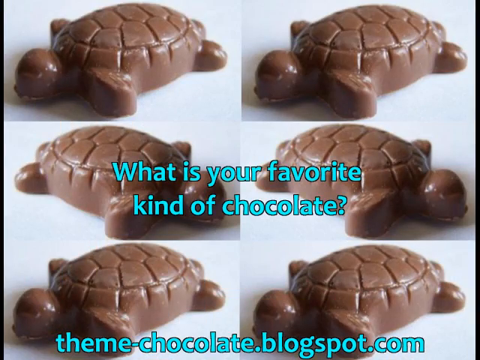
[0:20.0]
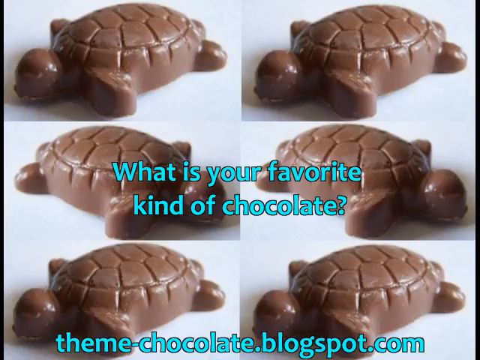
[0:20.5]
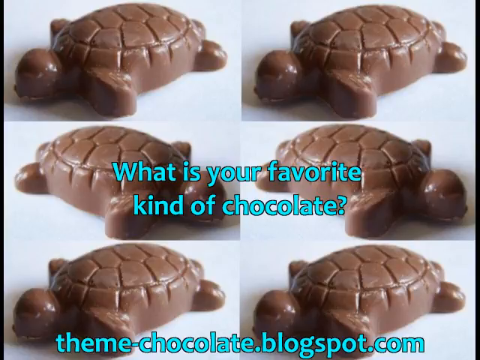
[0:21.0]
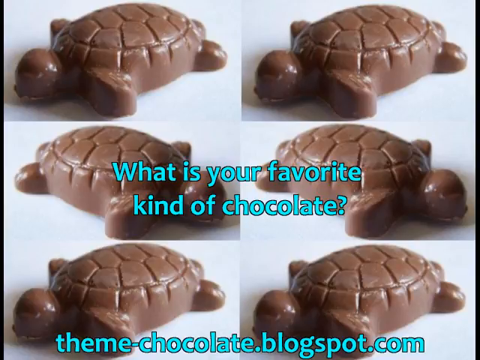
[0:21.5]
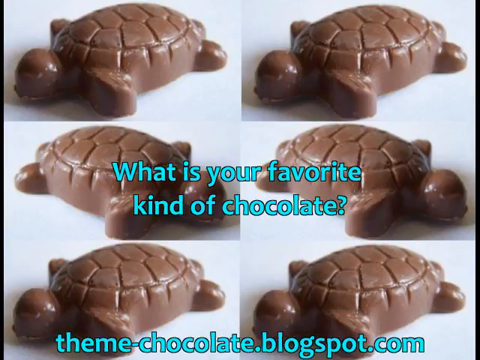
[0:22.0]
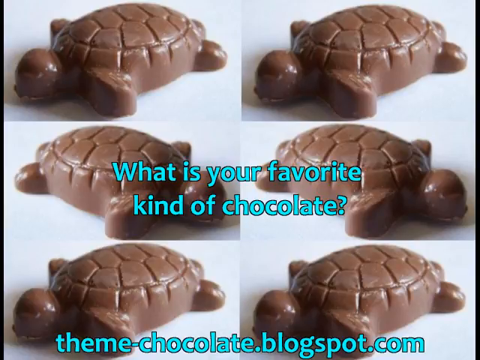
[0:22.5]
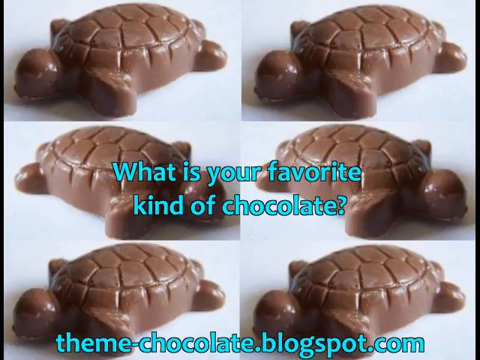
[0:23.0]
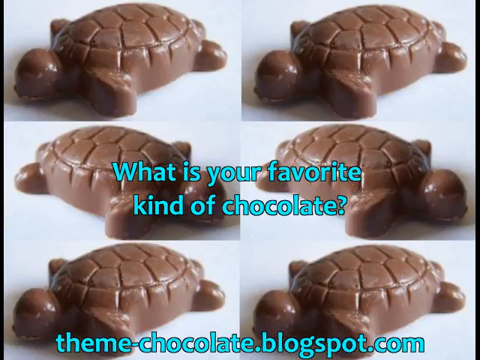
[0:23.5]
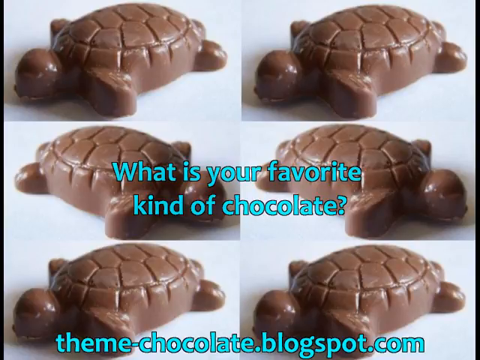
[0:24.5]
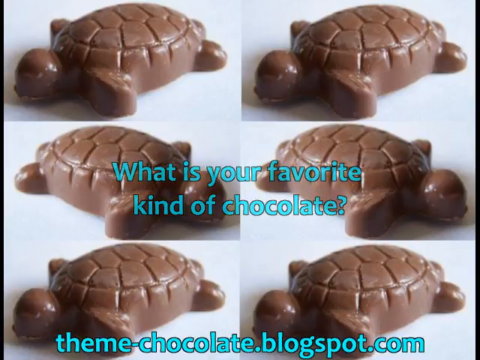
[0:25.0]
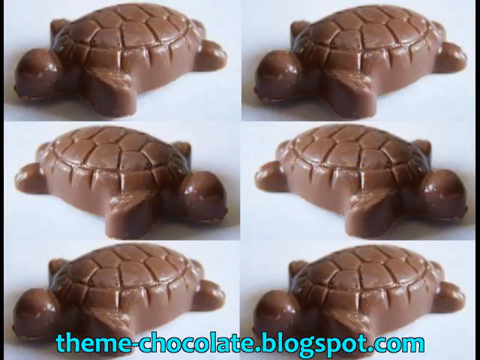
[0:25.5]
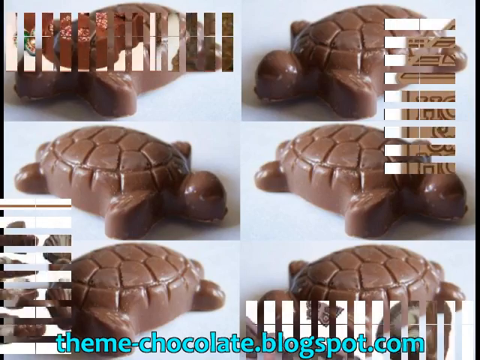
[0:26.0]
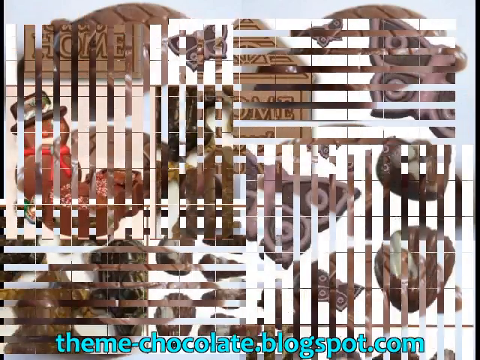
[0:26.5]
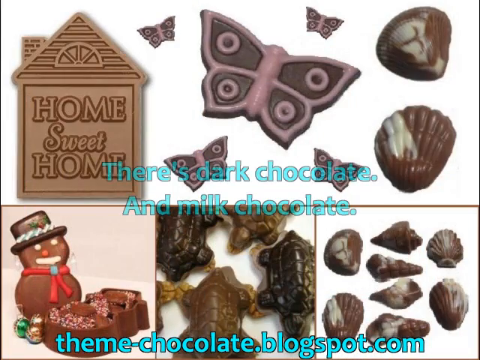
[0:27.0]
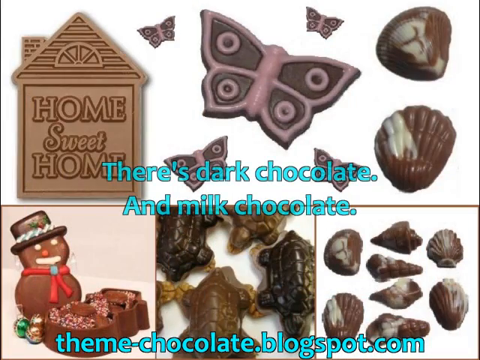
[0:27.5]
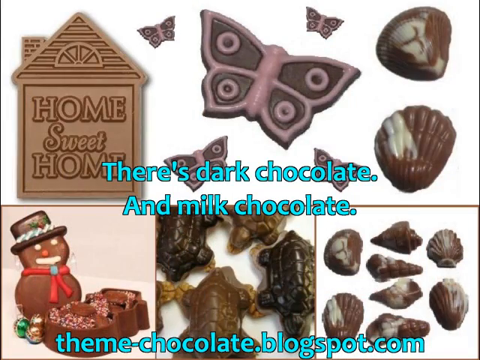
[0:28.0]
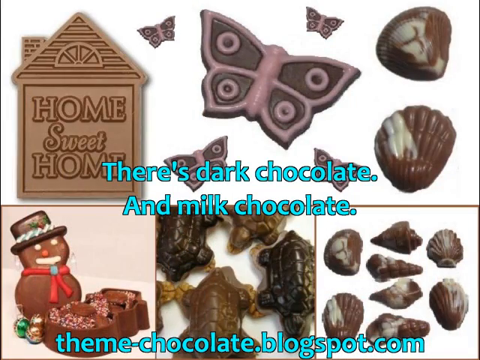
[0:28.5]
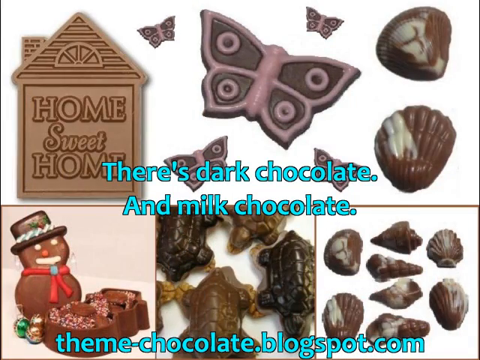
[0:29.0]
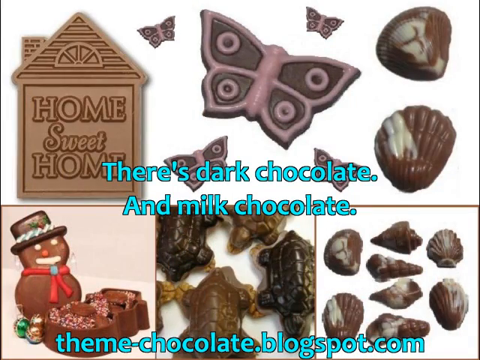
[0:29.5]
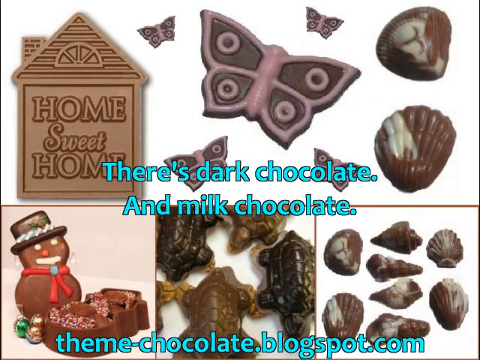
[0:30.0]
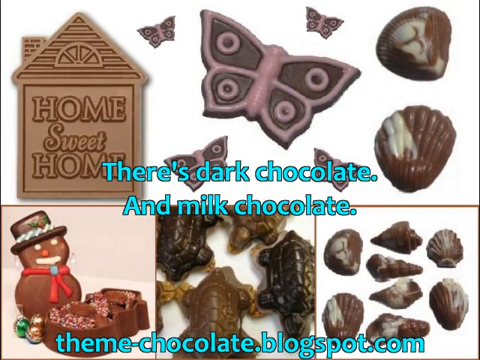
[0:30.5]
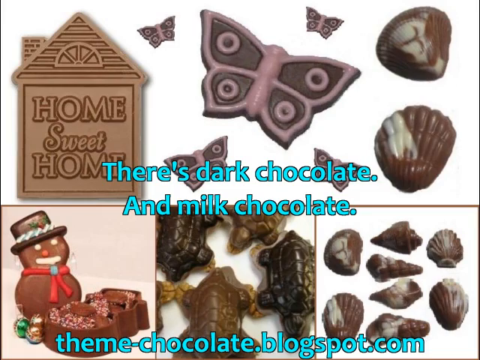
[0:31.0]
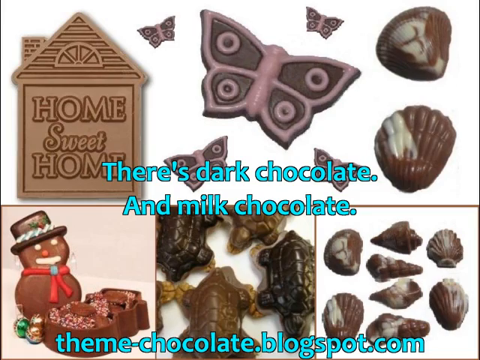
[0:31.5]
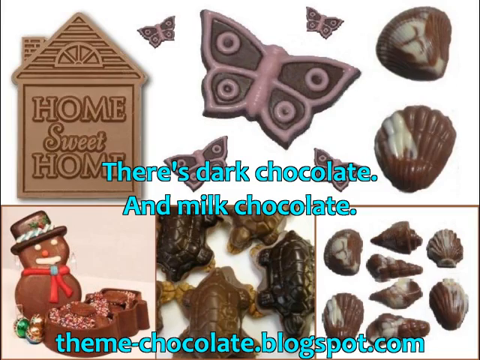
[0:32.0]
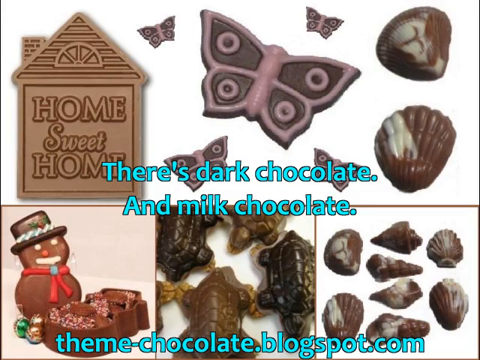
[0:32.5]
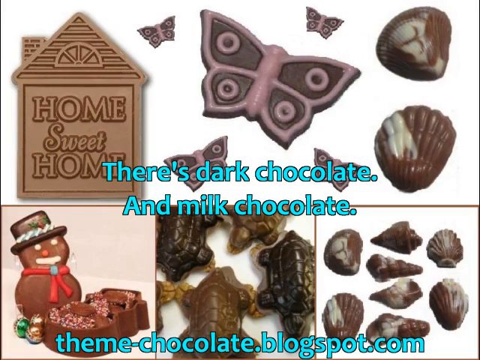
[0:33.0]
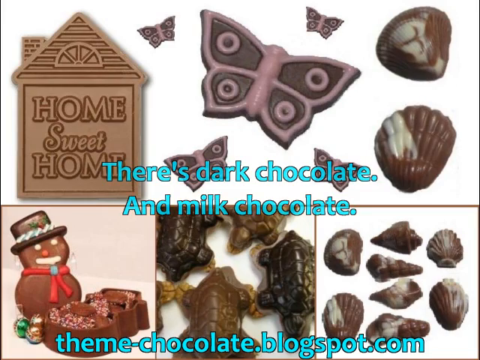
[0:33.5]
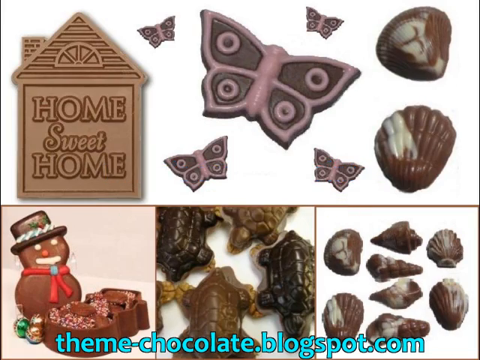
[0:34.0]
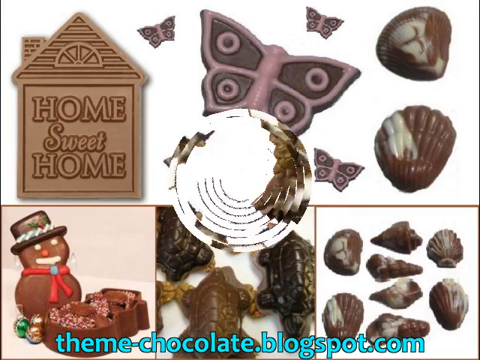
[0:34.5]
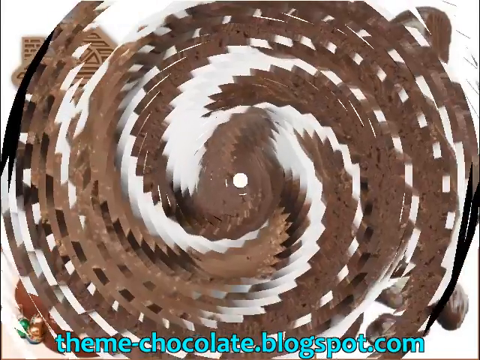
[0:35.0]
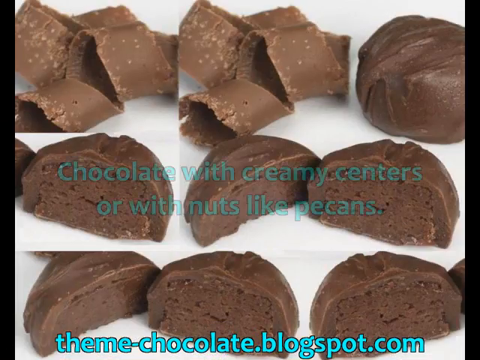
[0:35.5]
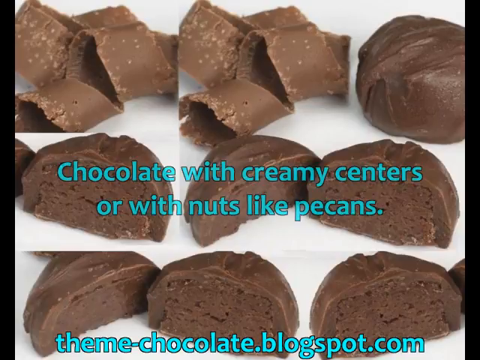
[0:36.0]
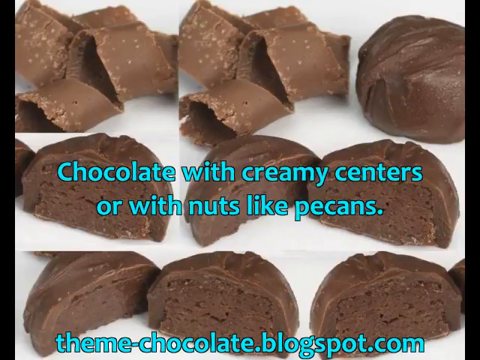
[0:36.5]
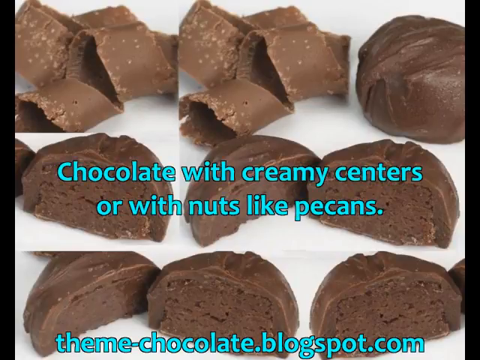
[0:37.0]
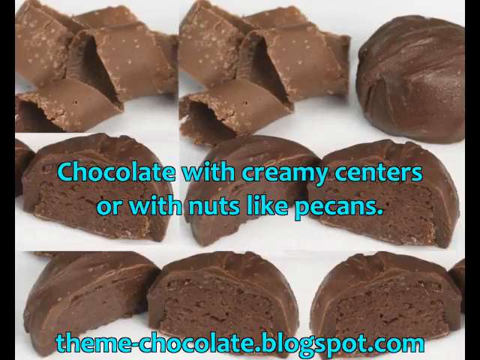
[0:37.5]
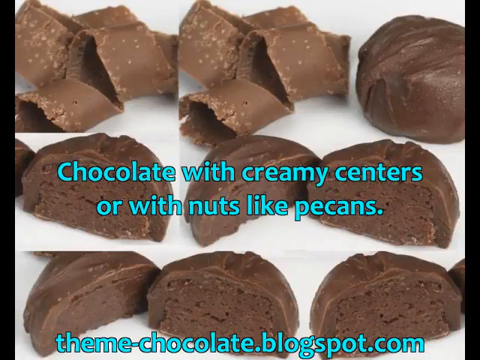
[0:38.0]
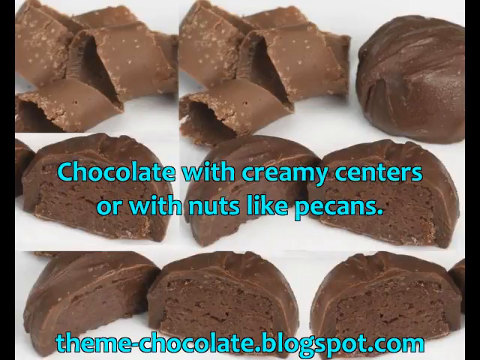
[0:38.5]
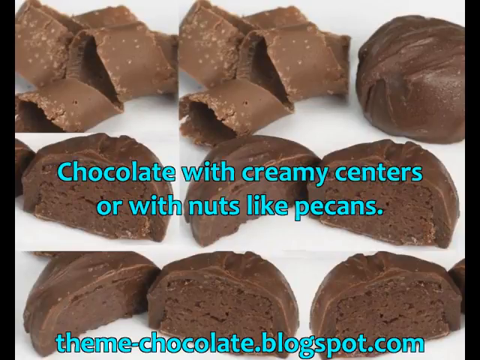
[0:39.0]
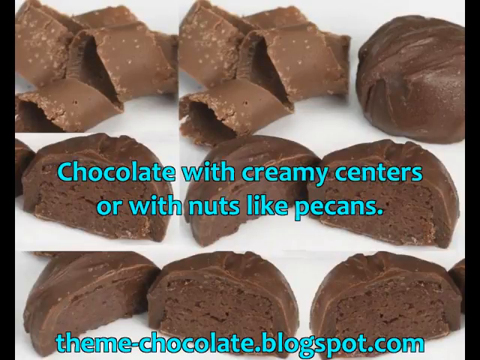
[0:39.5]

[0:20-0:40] Six turtle-shaped chocolates appear with green text across the middle of the screen reading, "what is your favorite kind of chocolate?" This stays on screen for five seconds. The image then transitions to more chocolates: a large butterfly with four smaller butterflies around it, two seashells on the right side, and on the left side a chocolate shaped like a home with a pointed roof and a chimney. On the lower half of the screen are a chocolate that looks like a snowman, some turtle-shaped chocolates and more seashells. Green text across the middle of the screen reads, "there is dark chocolate and milk chocolate." This image stays for about five seconds. Another transition shows more chocolates, this time round pieces that look like they have been sliced in half, with green text reading, "chocolates with creamy centers or with nuts like pecans," which remains on screen until the segment ends.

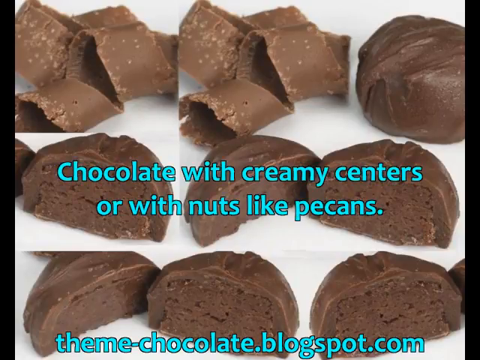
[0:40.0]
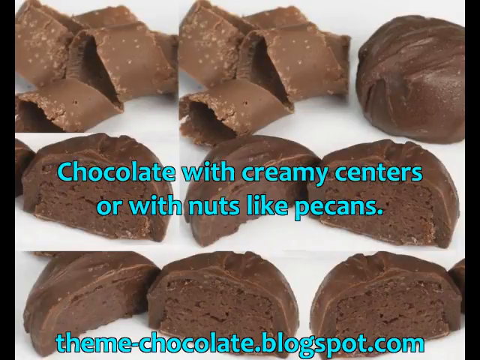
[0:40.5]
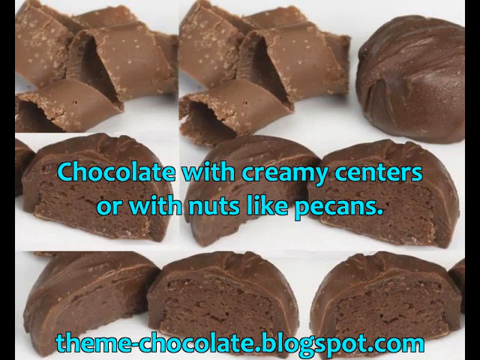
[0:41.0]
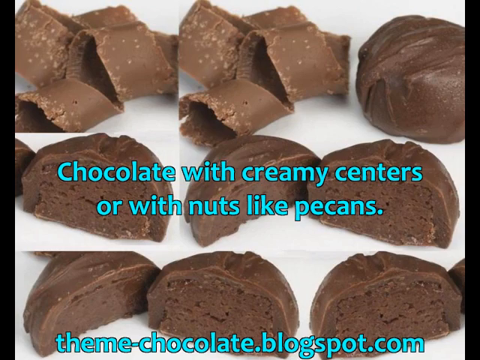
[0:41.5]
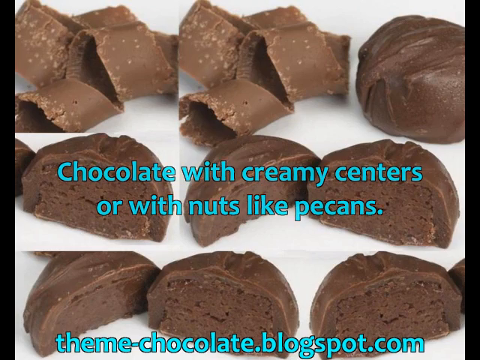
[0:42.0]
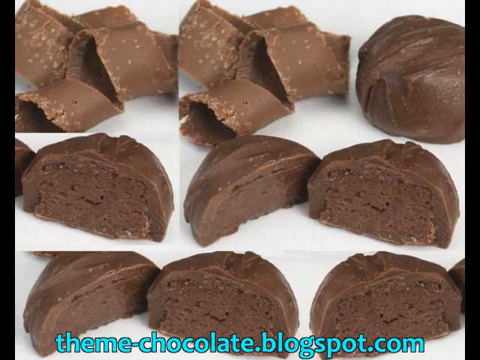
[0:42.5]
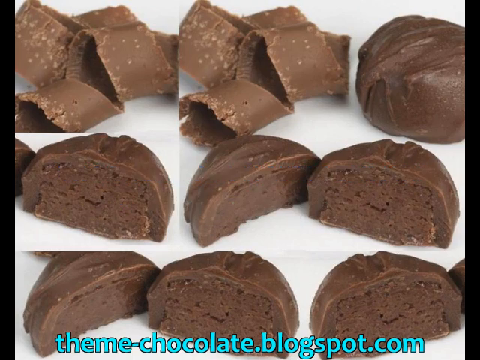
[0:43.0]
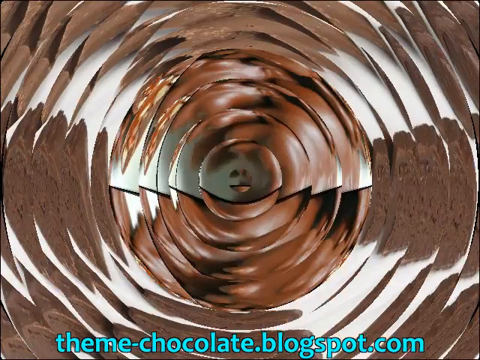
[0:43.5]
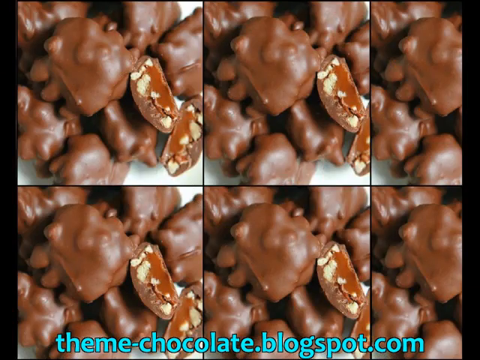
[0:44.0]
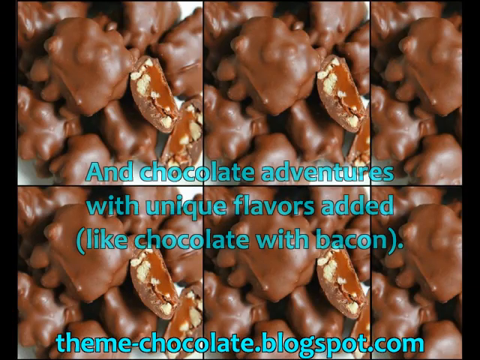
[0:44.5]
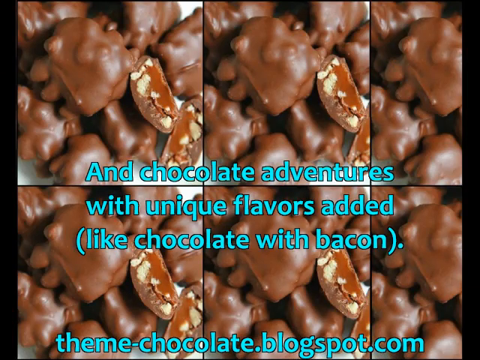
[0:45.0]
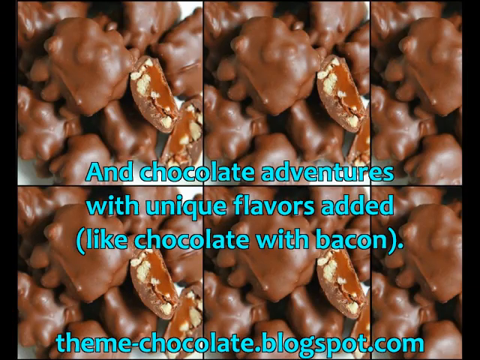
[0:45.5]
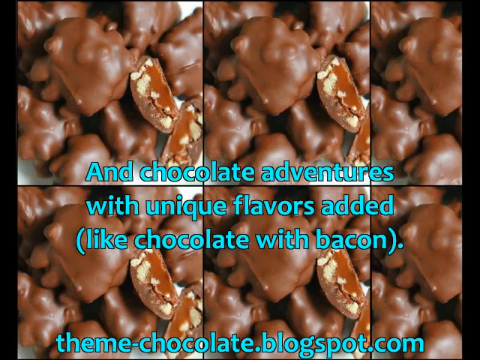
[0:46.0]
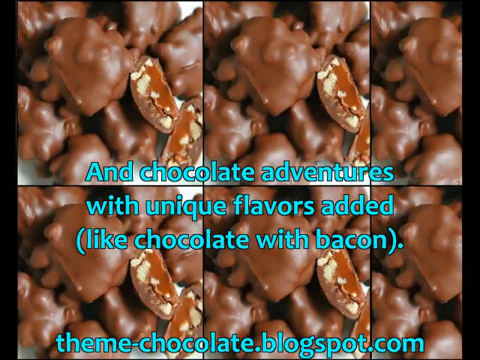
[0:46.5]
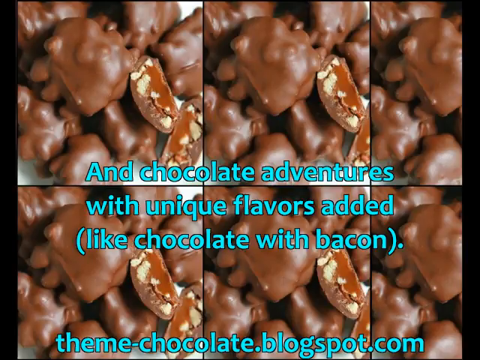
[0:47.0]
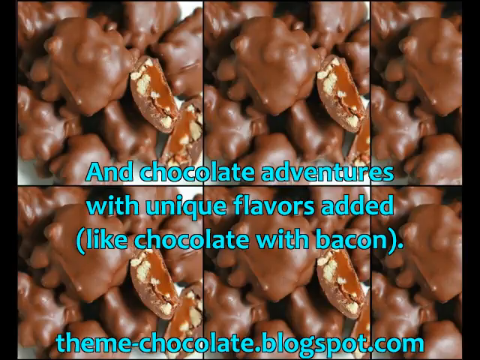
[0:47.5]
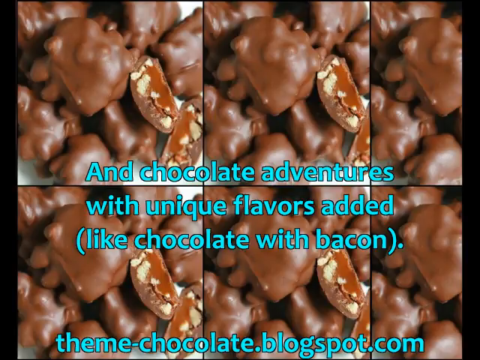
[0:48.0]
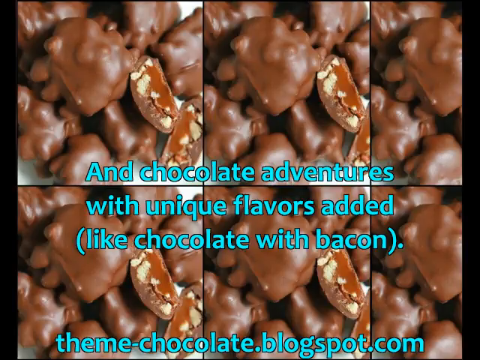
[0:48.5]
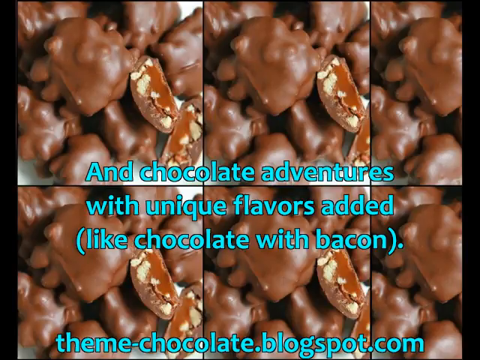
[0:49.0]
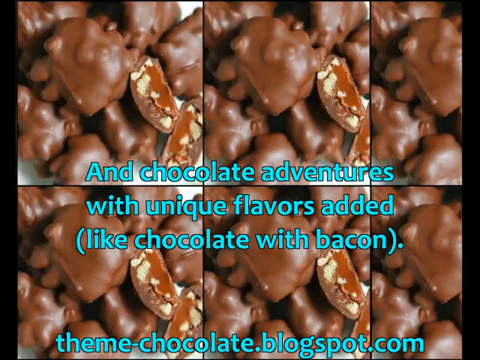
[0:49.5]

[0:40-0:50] An image shows three rows of chocolates. The chocolates are round and cut in half, revealing a chocolate candy filling in the middle of the halves. Green text across the screen reads, "chocolate with creamy centers or with nuts like pecans," for about three seconds. Next, a collage of six repeated identical images shows chocolates with nuts in them, with green text across the middle of the screen reading, "and chocolates with adventures with unique flavors added, like chocolates with bacon."